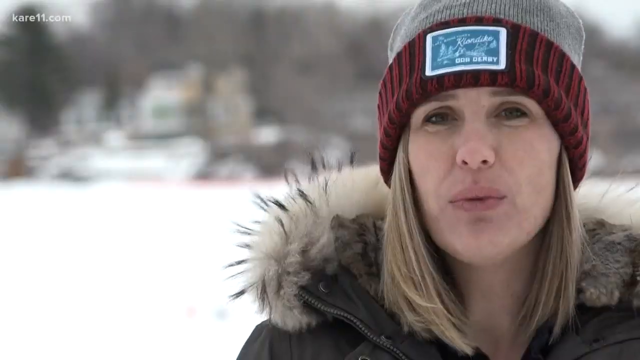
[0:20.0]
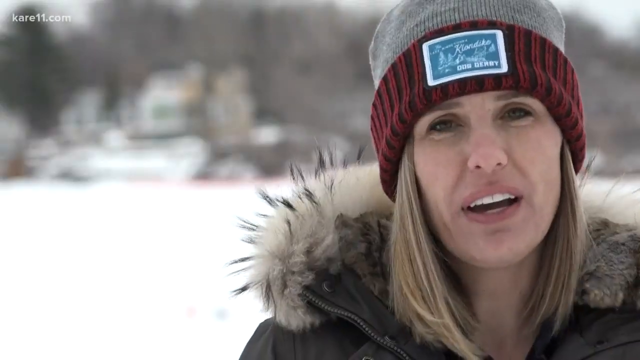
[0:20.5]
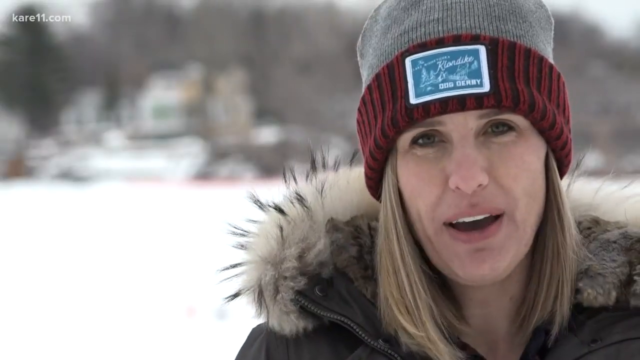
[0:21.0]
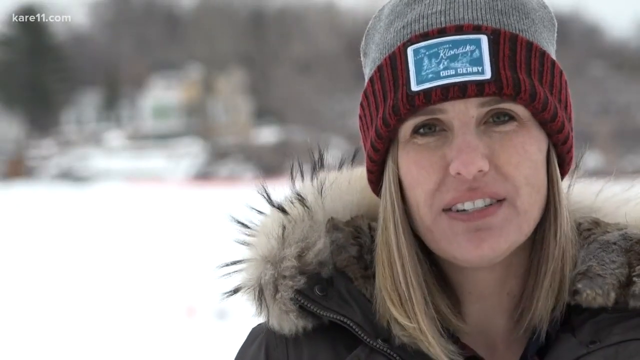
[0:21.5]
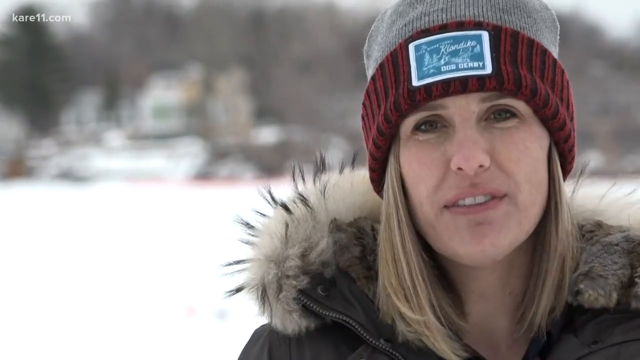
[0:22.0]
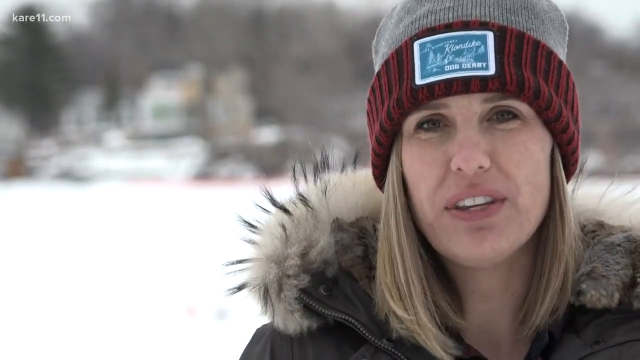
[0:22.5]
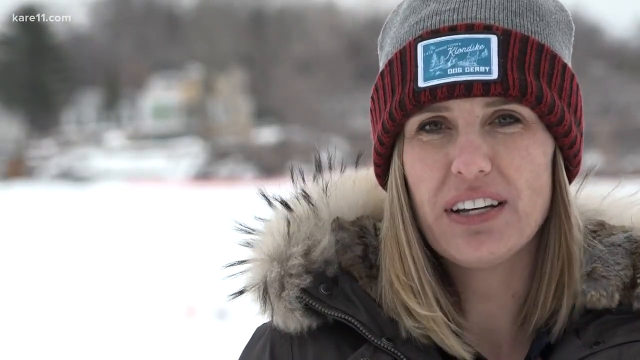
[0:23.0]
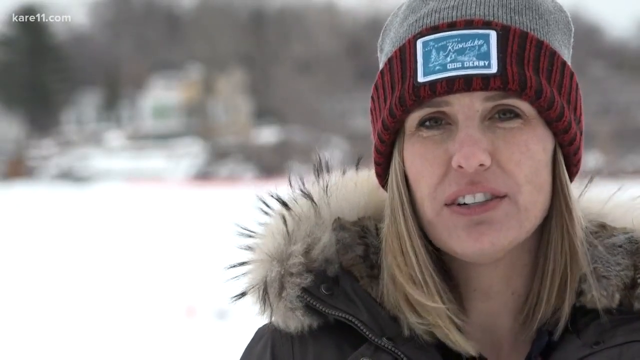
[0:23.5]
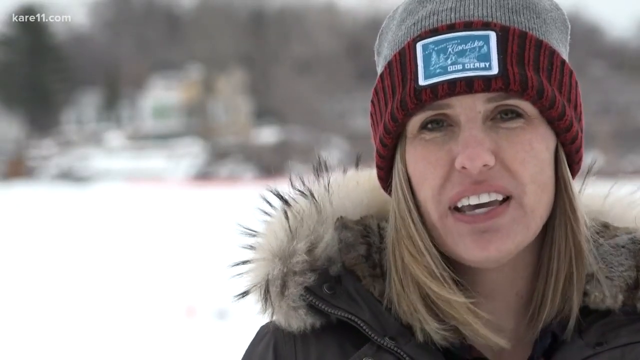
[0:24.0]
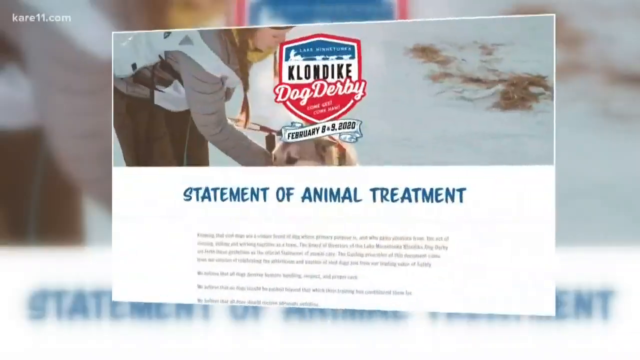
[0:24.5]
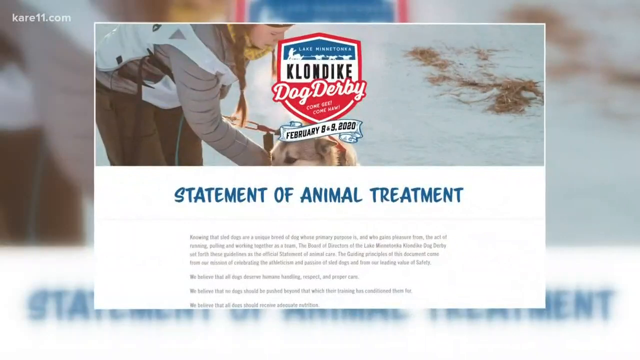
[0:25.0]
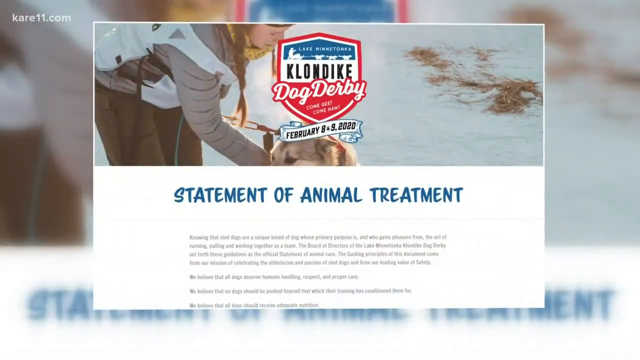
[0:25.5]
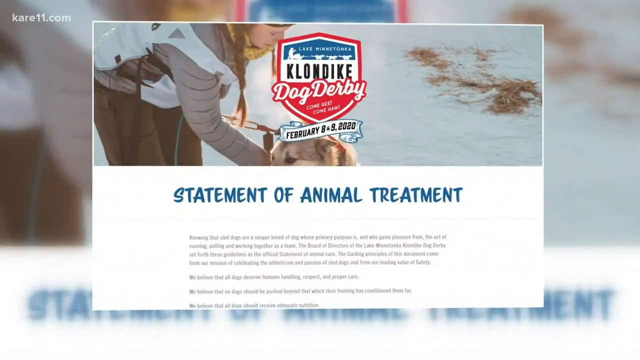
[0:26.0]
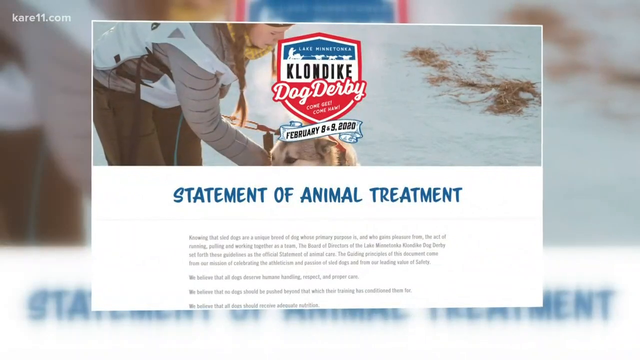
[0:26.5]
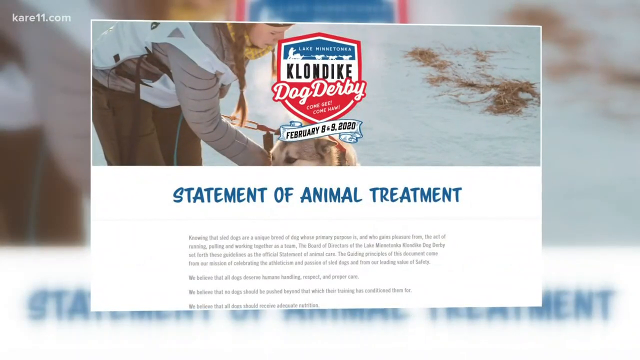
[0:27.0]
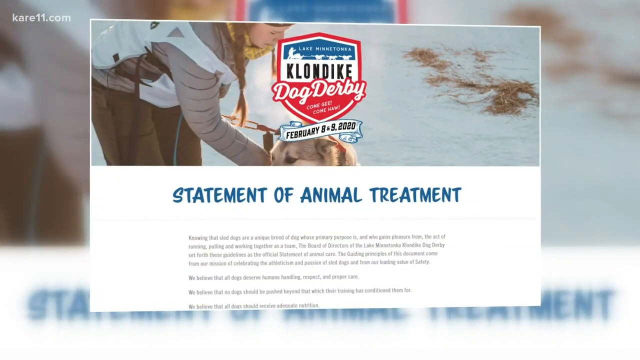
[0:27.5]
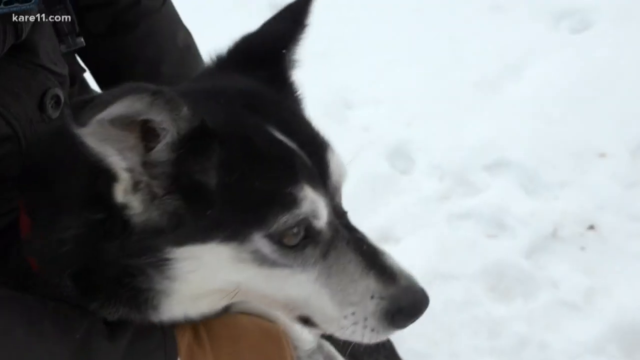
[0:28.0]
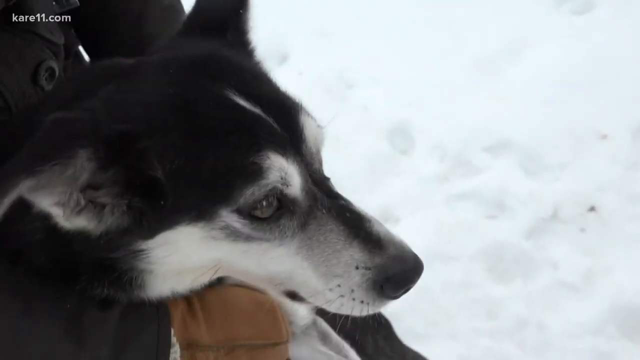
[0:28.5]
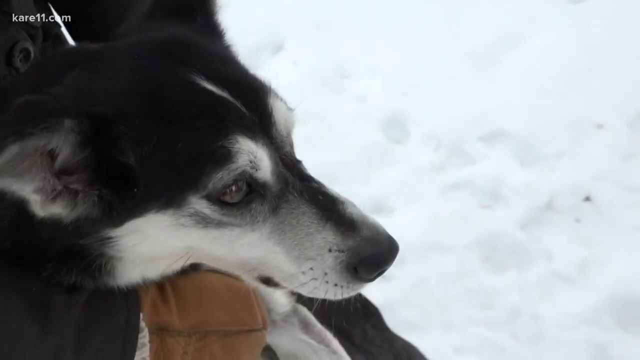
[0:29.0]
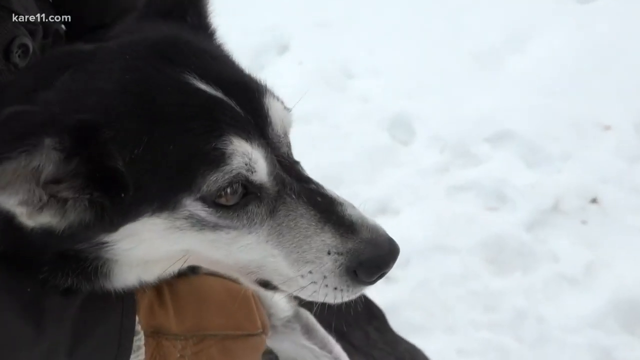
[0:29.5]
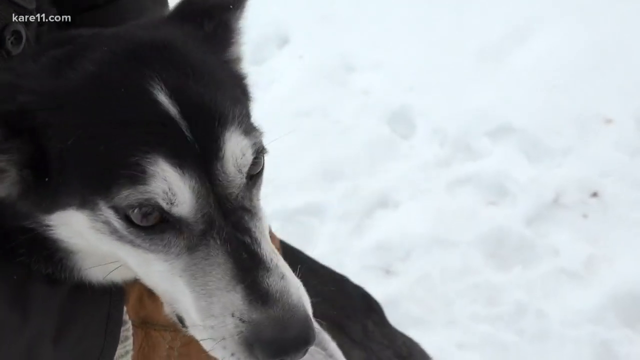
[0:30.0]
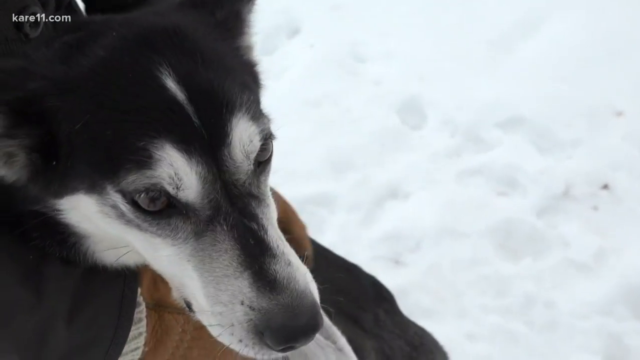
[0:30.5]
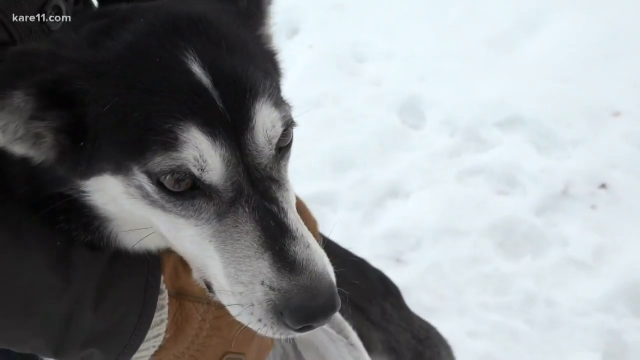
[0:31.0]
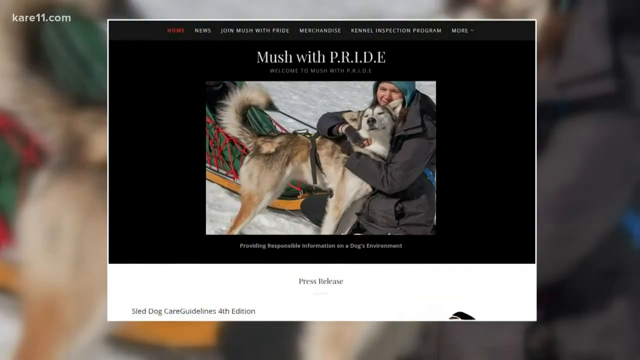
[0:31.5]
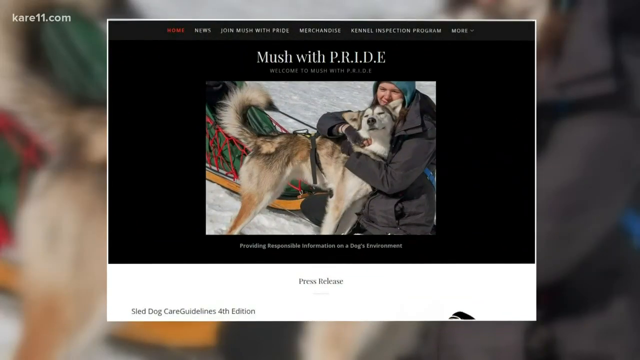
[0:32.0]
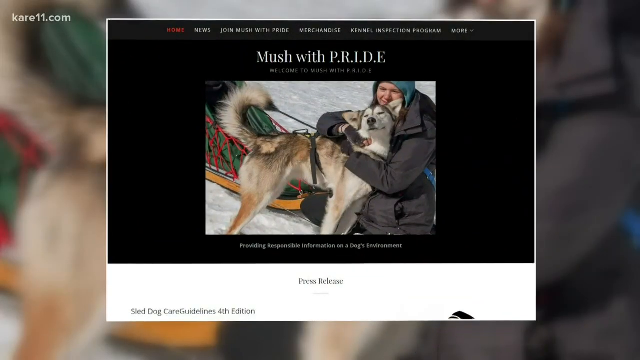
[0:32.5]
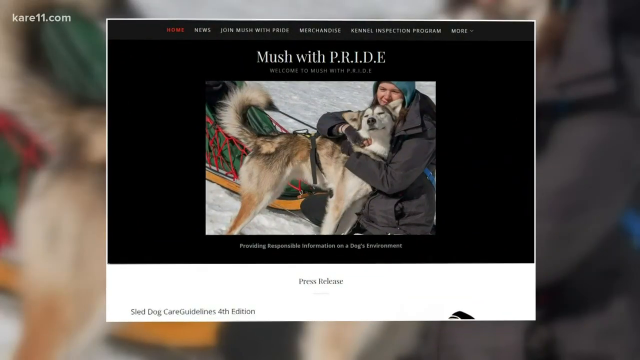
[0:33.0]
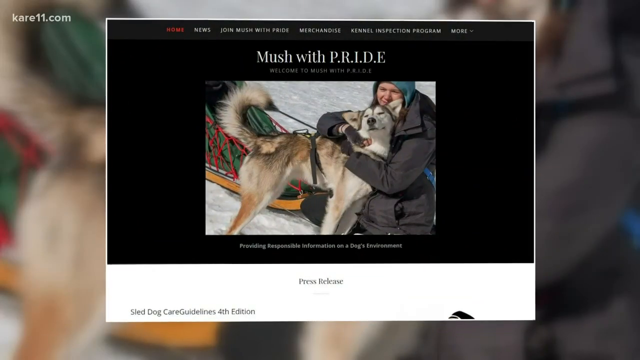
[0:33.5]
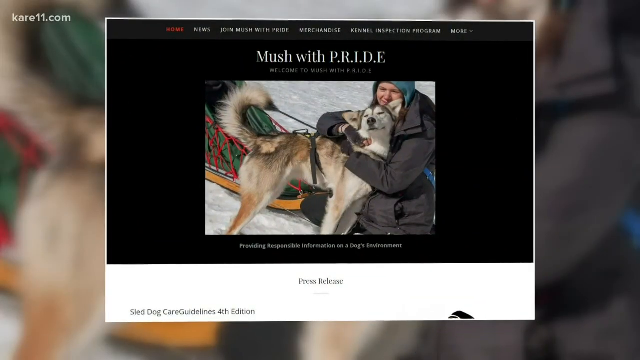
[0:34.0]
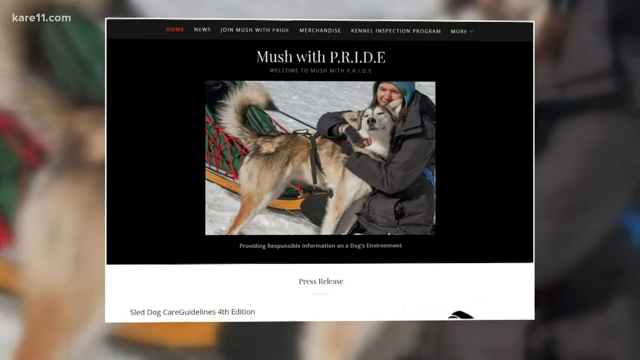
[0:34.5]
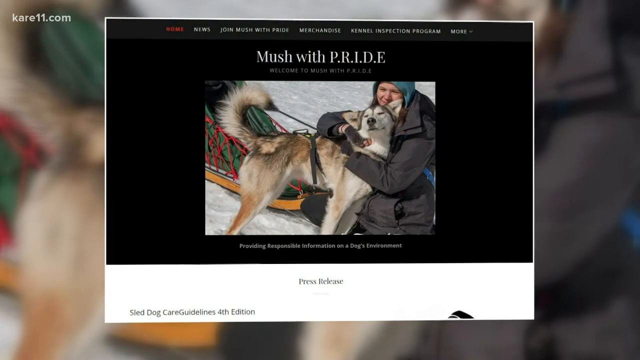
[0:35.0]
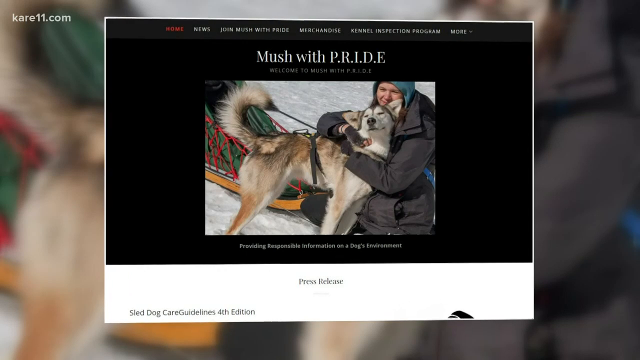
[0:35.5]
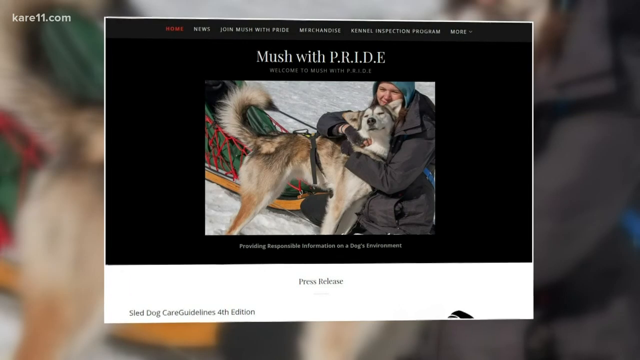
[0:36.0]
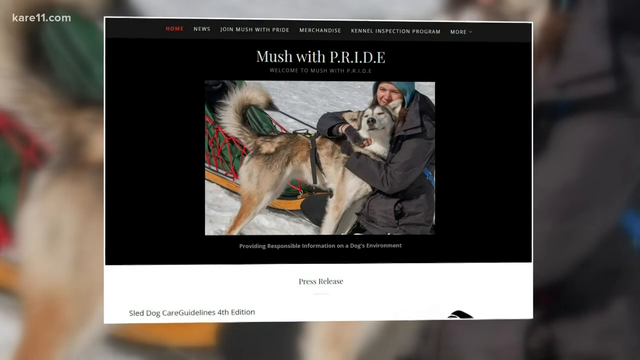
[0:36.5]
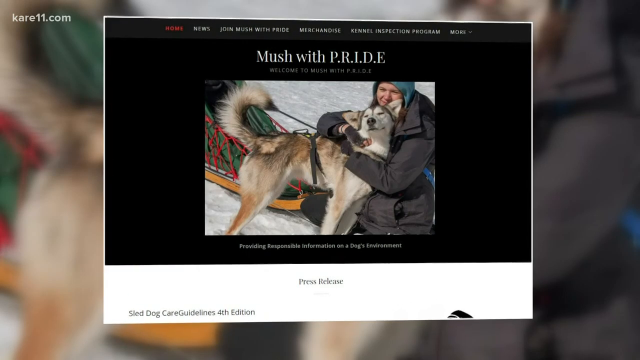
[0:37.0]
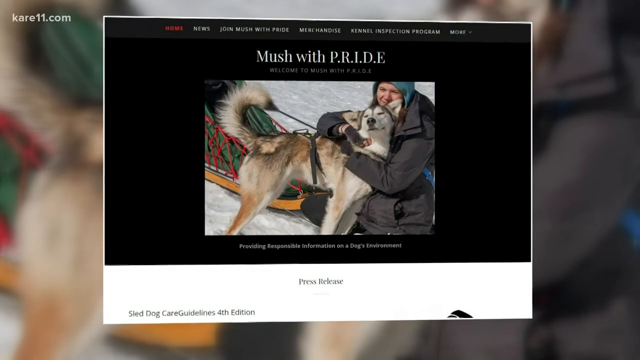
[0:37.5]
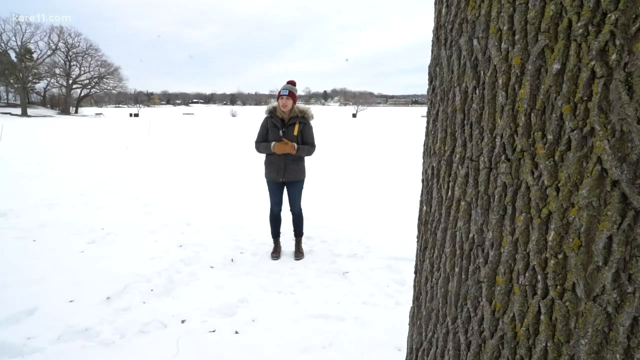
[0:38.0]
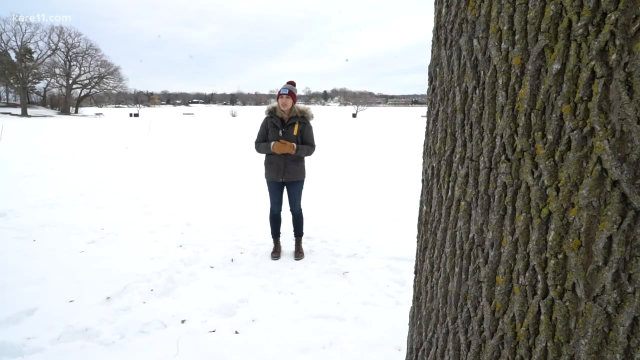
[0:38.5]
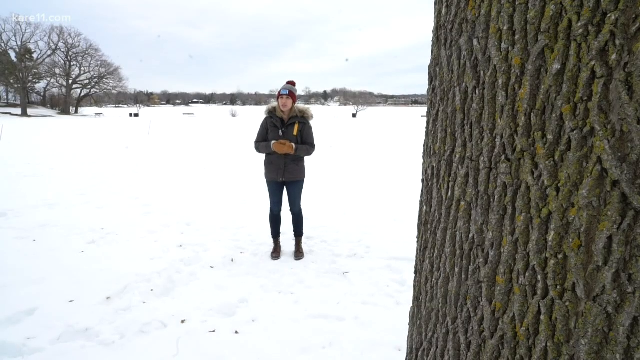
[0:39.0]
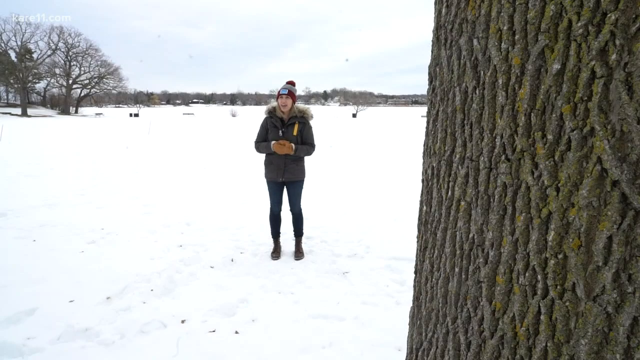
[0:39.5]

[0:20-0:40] A small white watermark reading "kare11.com" is in the top left corner of the screen. A woman in her early 30s with blonde hair and dark eyes wears a toboggan with a patch on it; its rim is vertically striped in maroon and red, and the top is gray. She has on a thick coat with a furry collar and is outside in the snow. Then a sign reading "Klondike Dog Derby" appears, with "February 8th, 9th, 2020" underneath it, and below that, in blue lettering, "Statement of Animal Treatment".